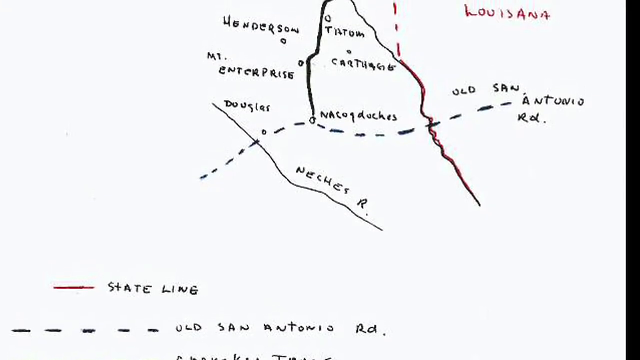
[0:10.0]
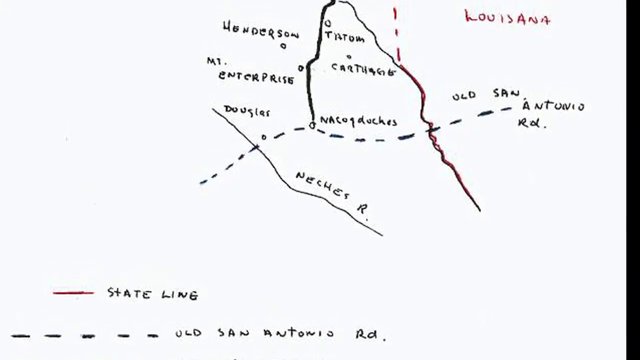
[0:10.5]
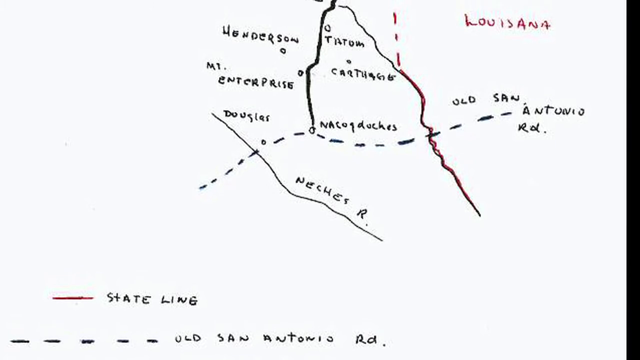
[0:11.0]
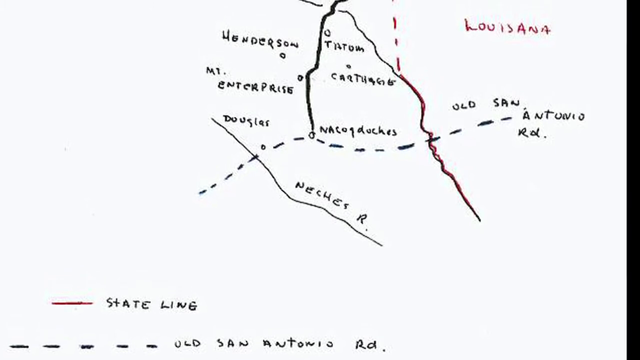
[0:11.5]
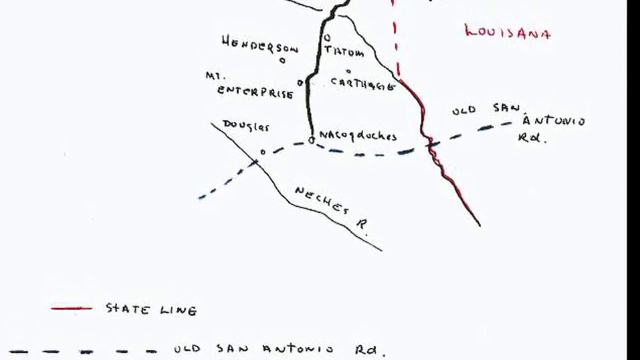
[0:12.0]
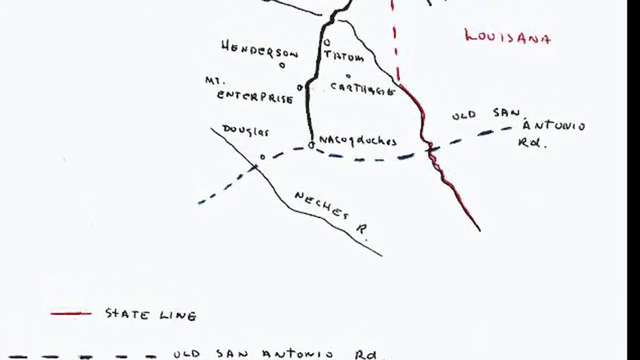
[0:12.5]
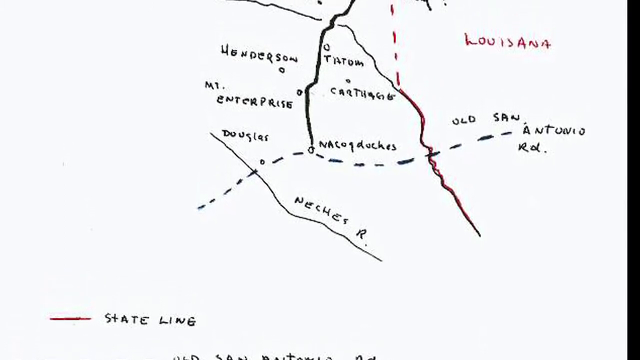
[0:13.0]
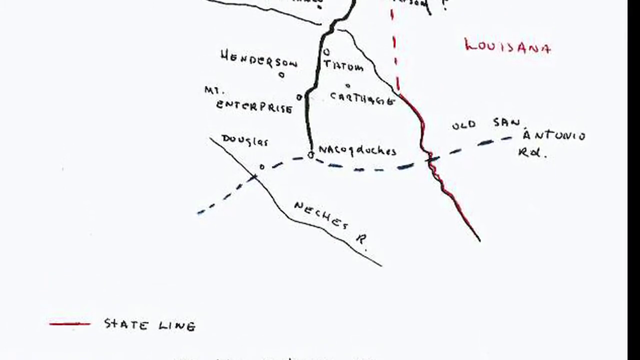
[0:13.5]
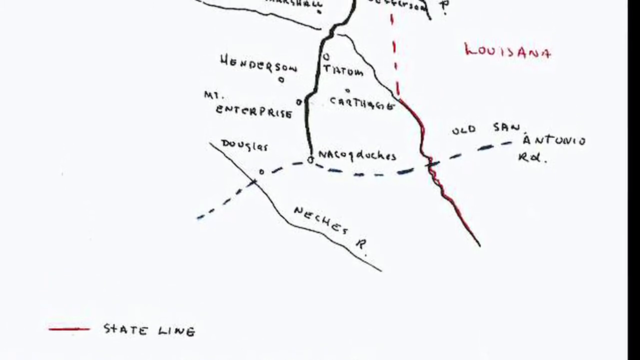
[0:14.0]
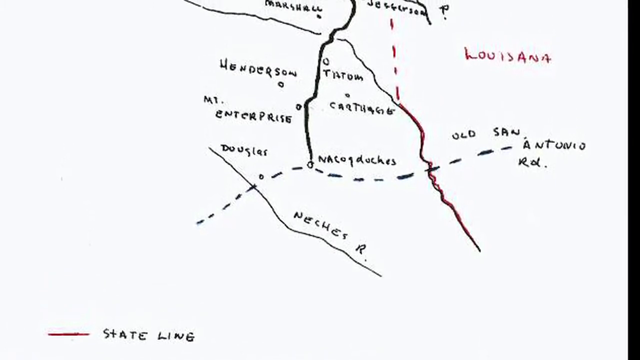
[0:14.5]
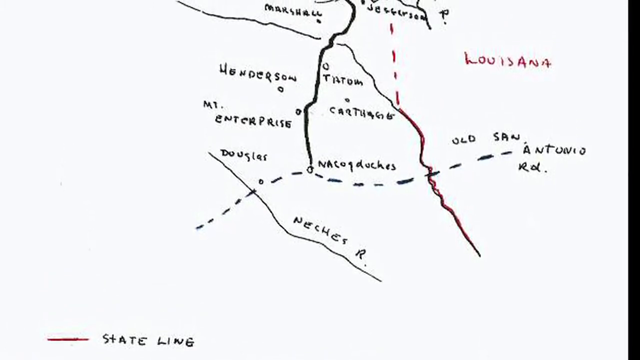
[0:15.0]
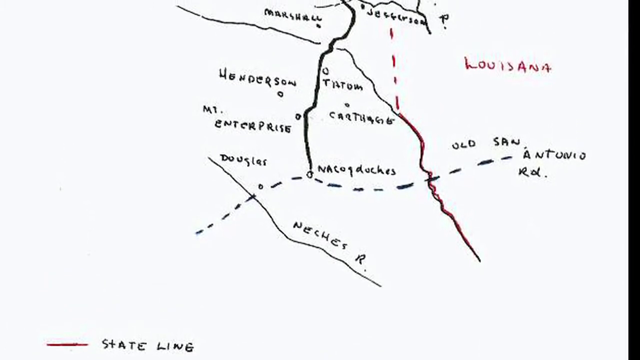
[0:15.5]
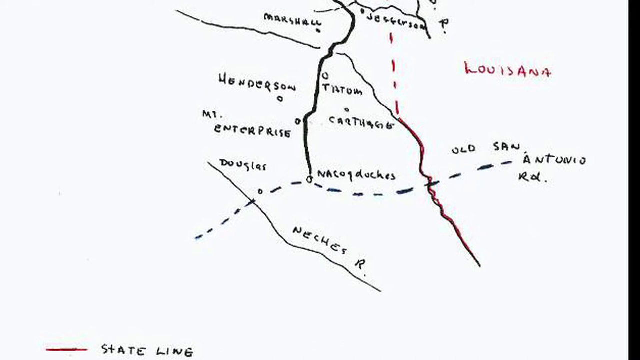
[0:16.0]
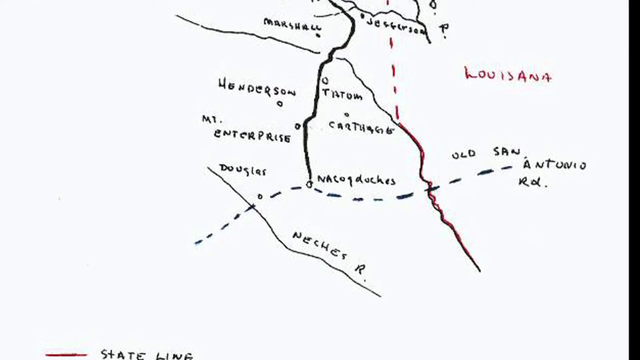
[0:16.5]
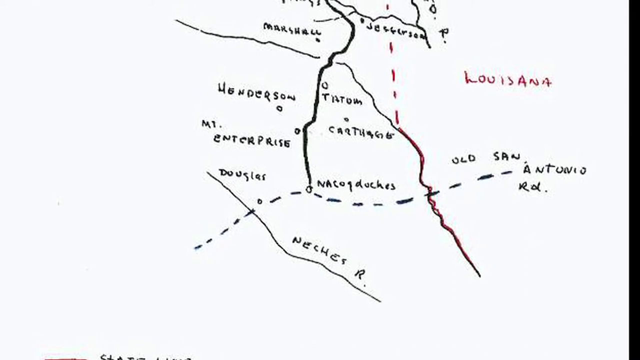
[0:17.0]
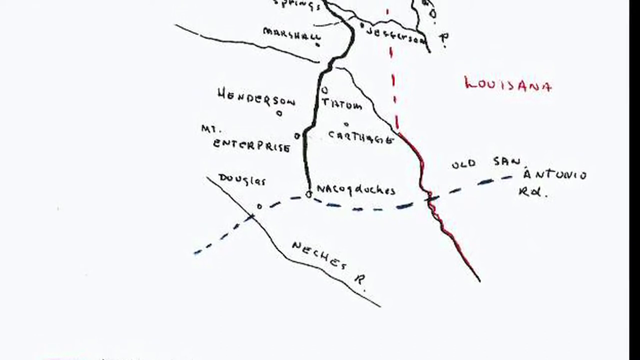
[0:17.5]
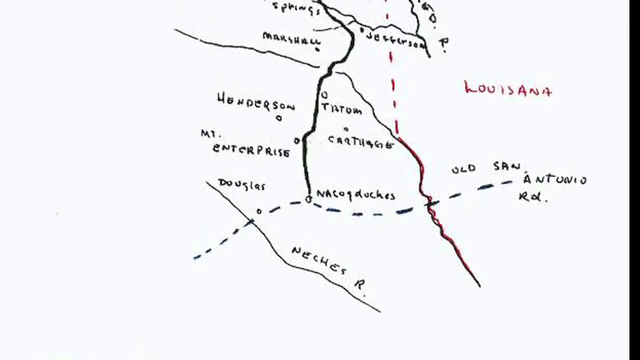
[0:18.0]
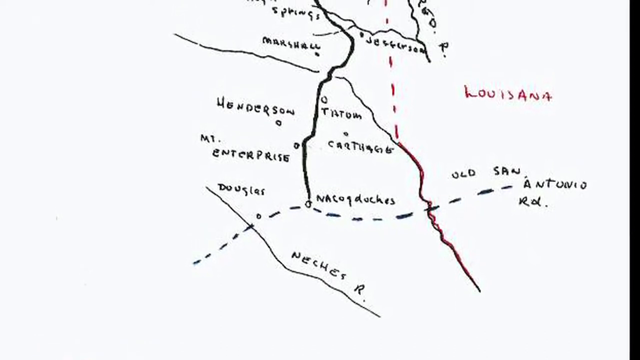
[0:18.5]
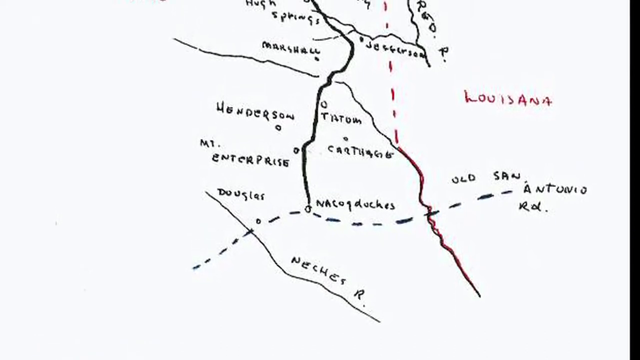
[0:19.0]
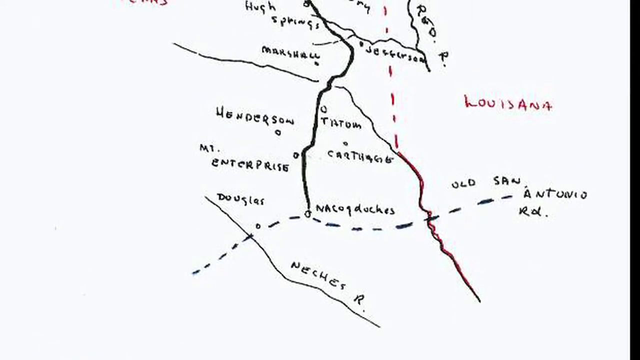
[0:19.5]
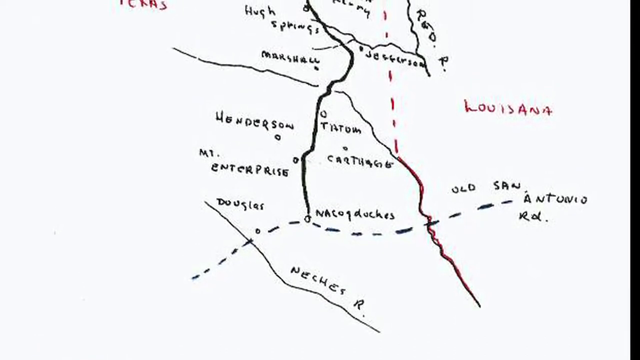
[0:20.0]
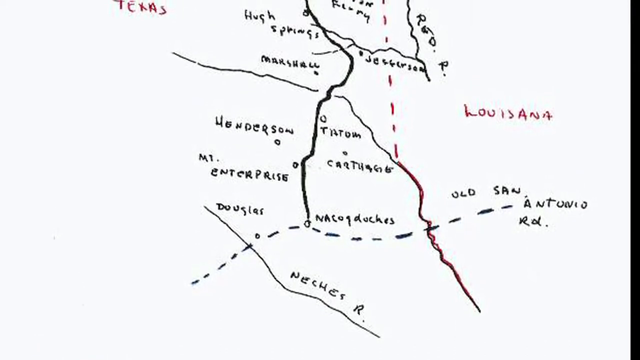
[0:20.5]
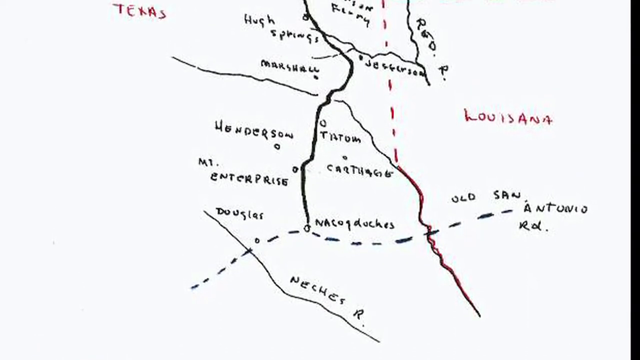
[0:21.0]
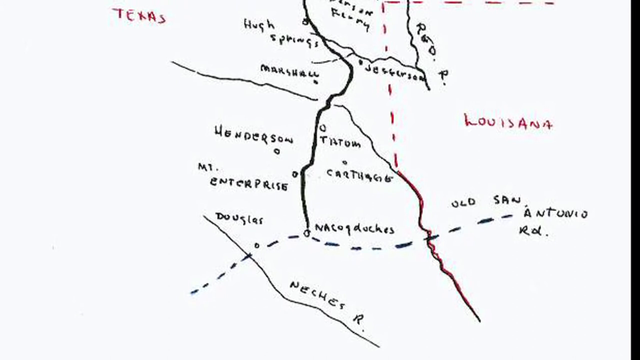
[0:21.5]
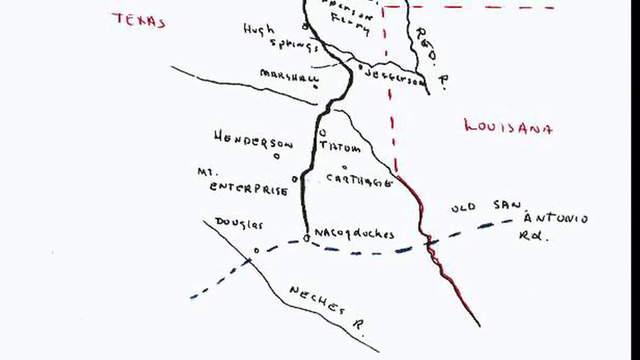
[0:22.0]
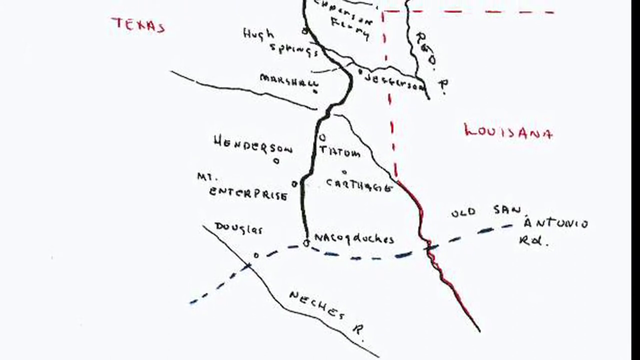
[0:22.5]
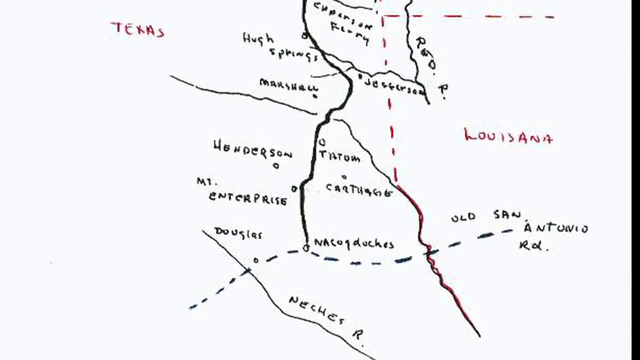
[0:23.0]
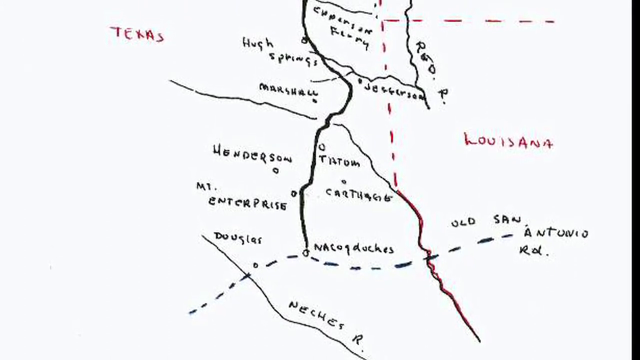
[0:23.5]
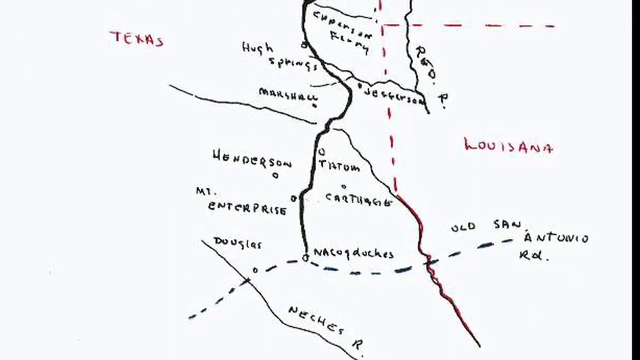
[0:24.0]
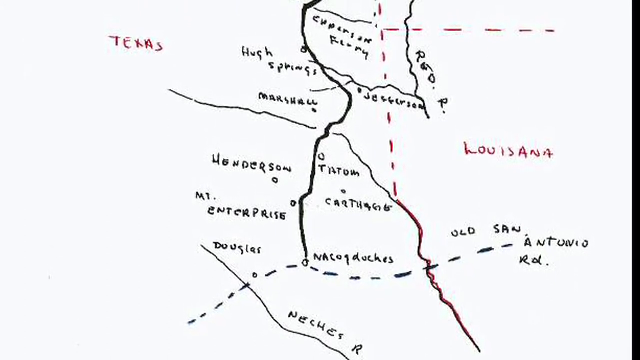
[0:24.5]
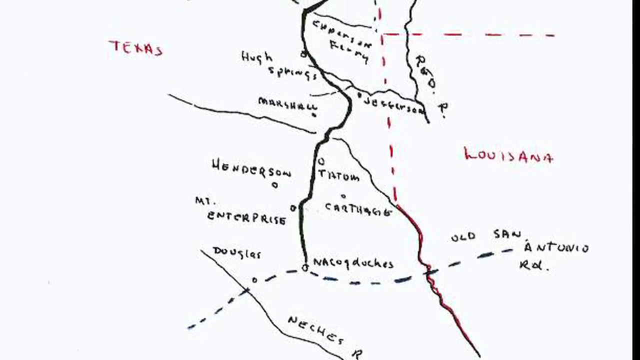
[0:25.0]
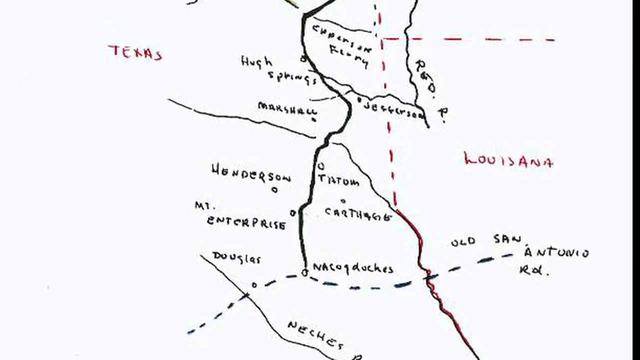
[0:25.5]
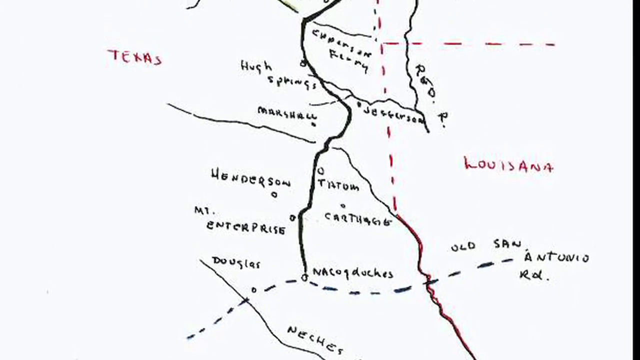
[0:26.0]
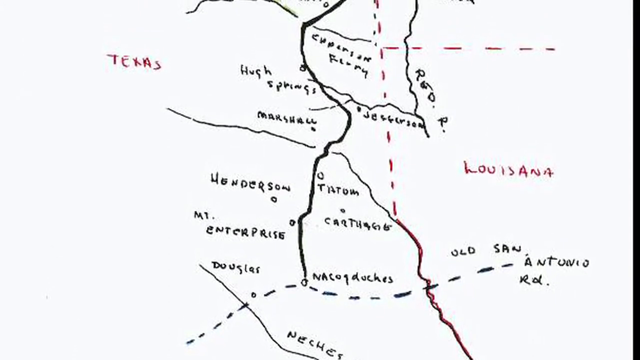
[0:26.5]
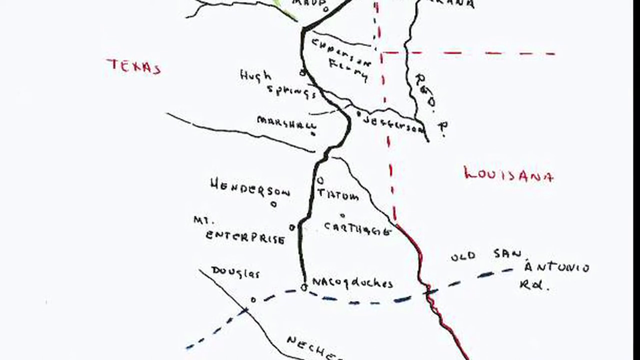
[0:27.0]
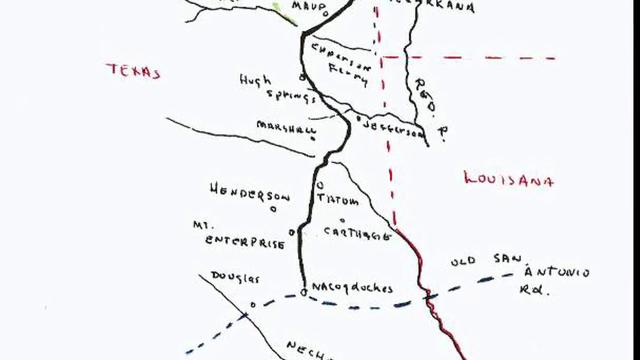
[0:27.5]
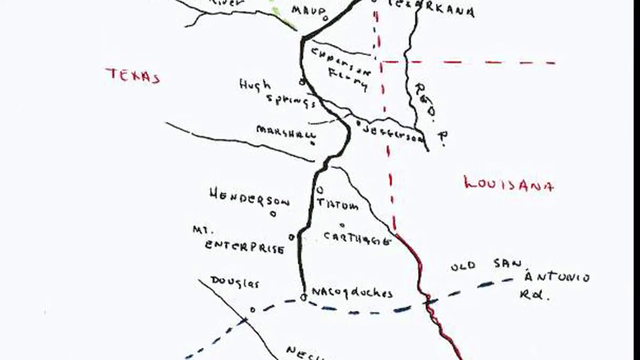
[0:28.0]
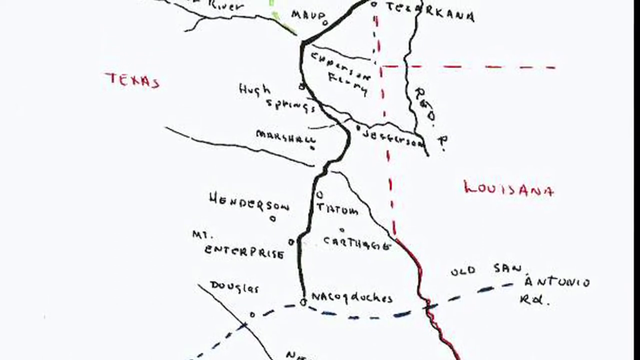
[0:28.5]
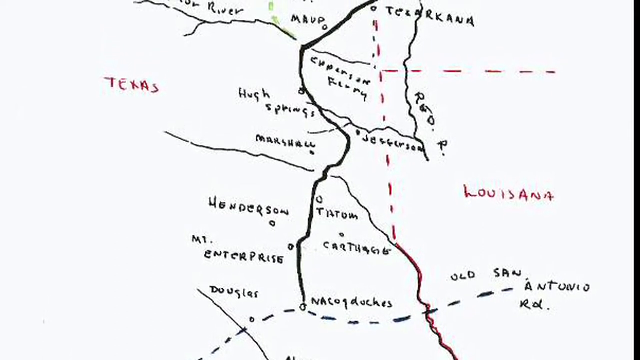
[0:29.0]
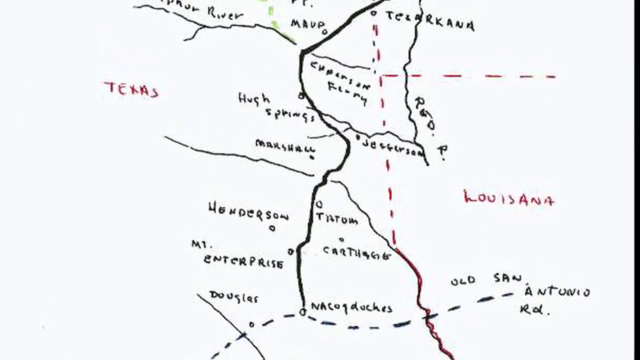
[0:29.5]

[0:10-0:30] A hand-drawn map appears, apparently a map of Lusana, with the name written in red on the left side of the map. Other areas are labeled on it, including Henderson, among others. The map has a white background, and all the other area names are written in black letters. Another part of the map then appears, seemingly showing areas in Texas, and these areas are labeled one by one, also in black letters. At the bottom there is a red line with the words "state line" written in black block letters.